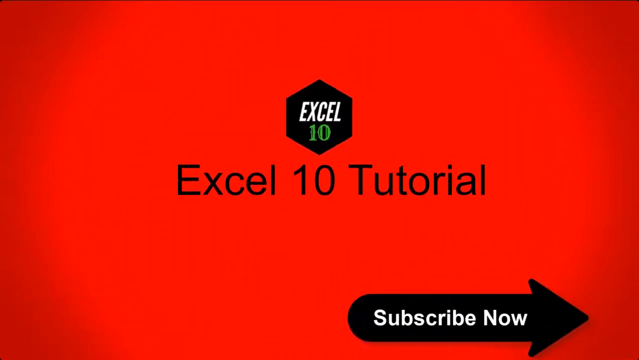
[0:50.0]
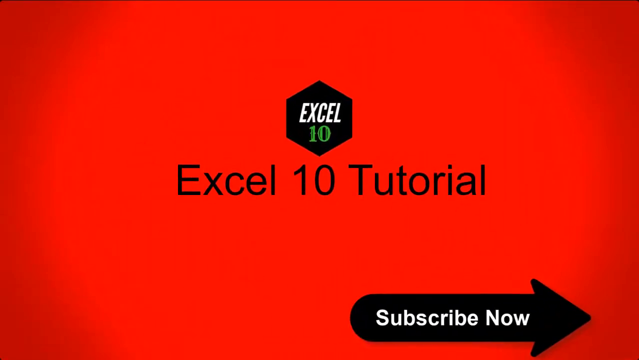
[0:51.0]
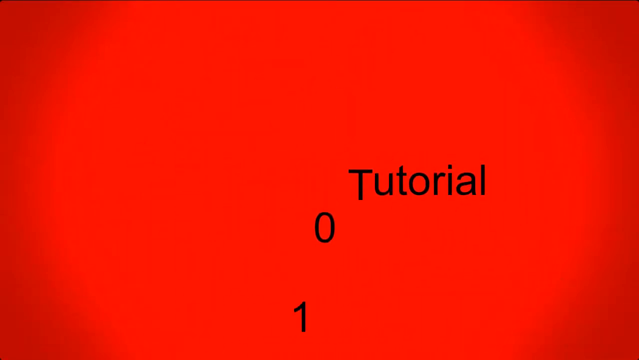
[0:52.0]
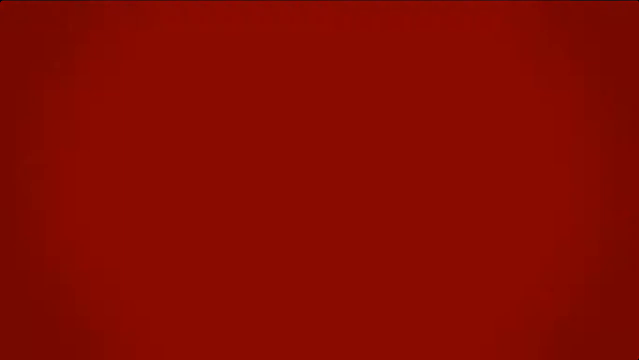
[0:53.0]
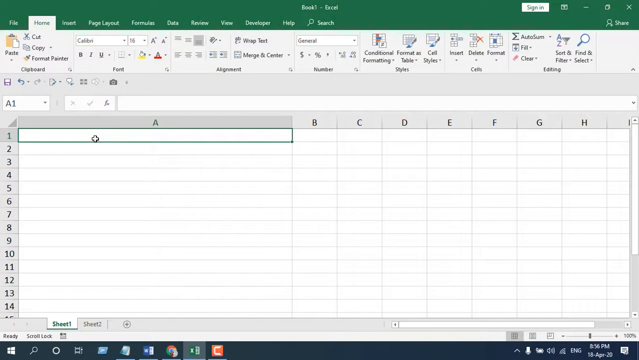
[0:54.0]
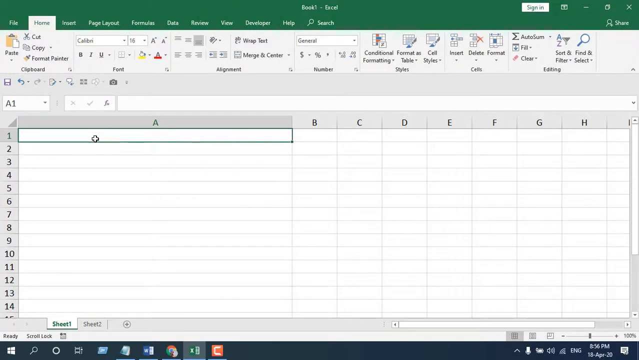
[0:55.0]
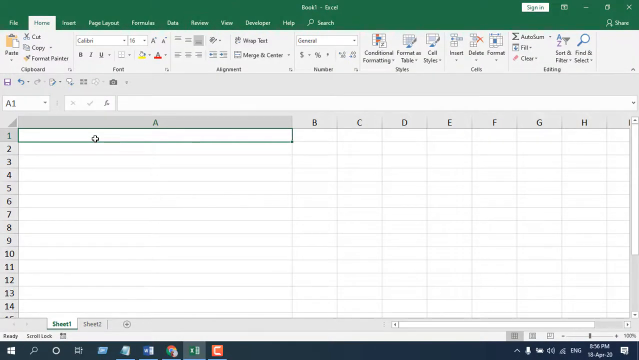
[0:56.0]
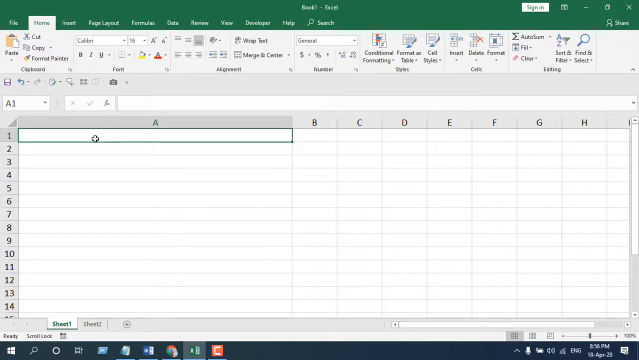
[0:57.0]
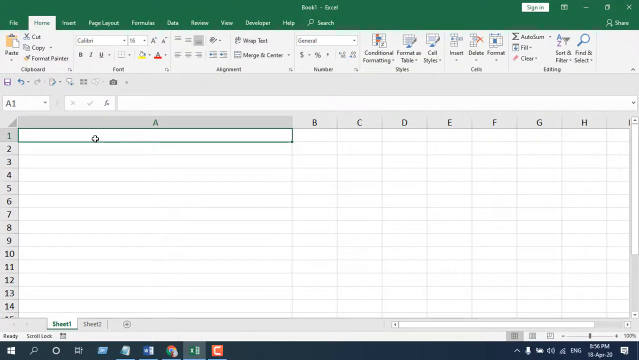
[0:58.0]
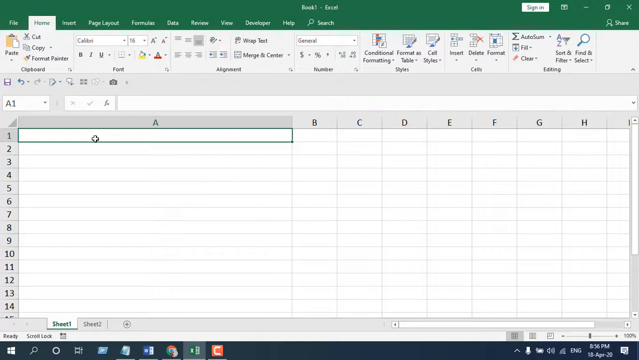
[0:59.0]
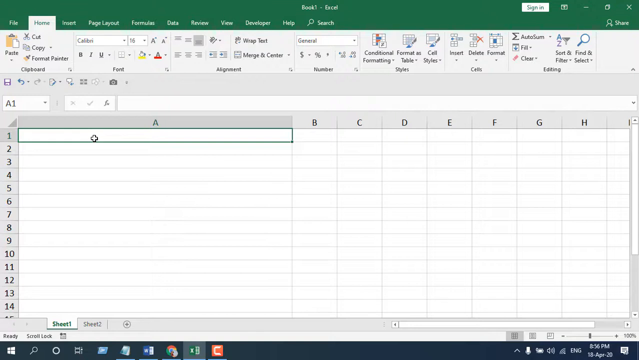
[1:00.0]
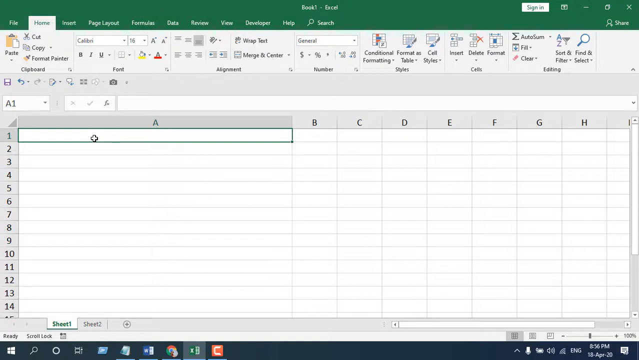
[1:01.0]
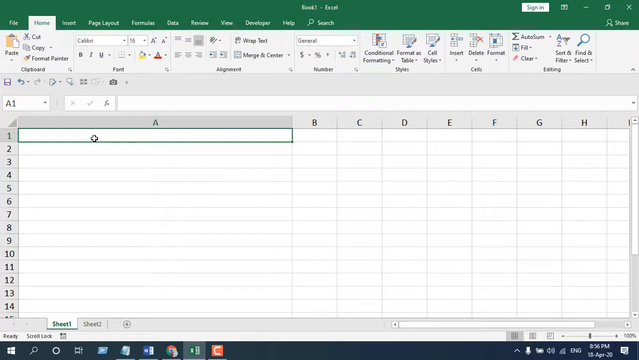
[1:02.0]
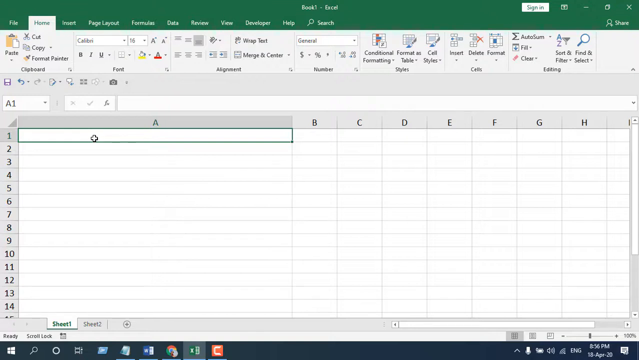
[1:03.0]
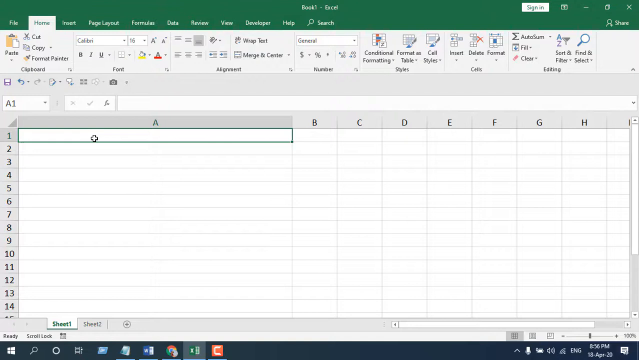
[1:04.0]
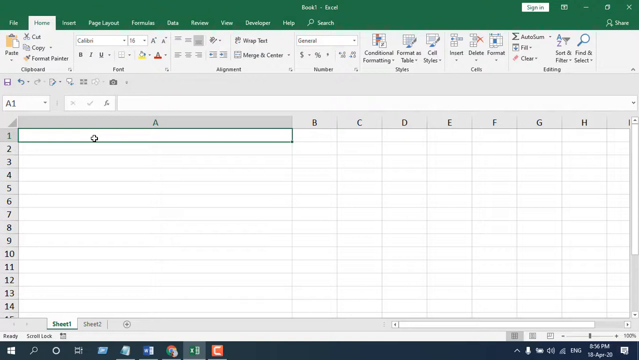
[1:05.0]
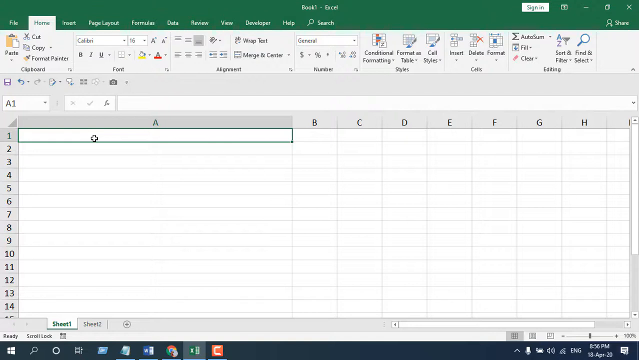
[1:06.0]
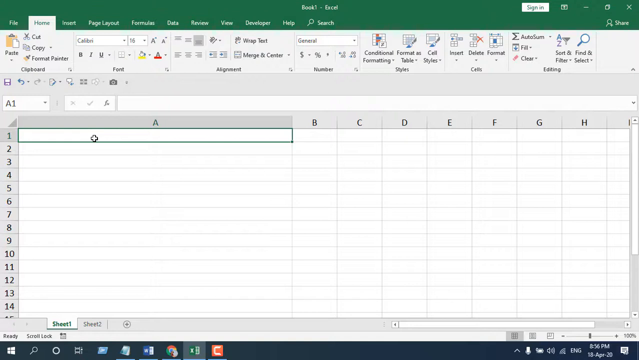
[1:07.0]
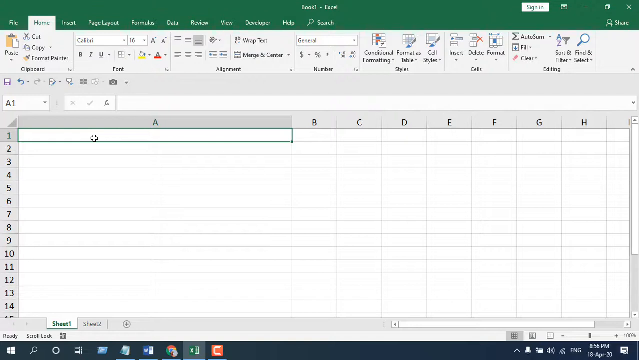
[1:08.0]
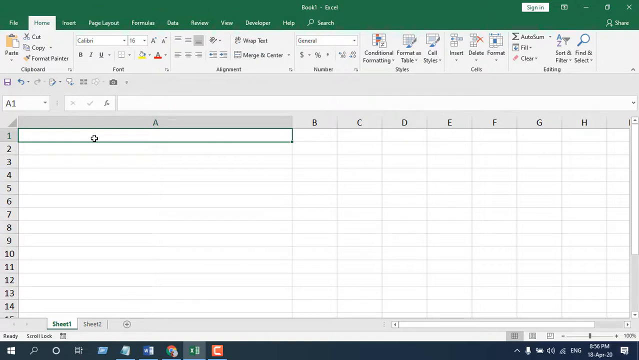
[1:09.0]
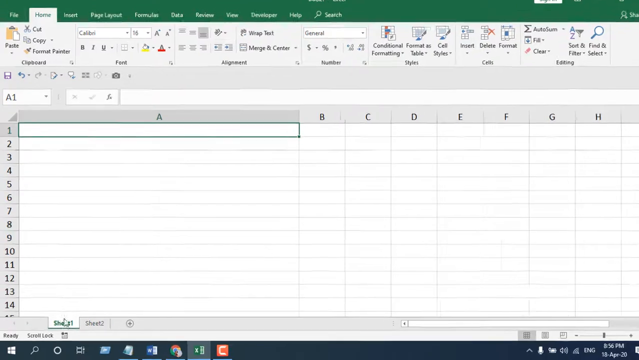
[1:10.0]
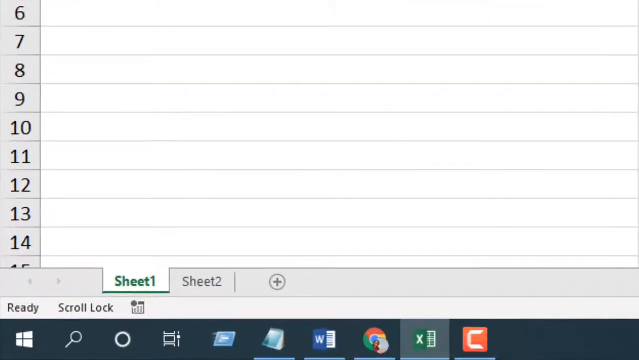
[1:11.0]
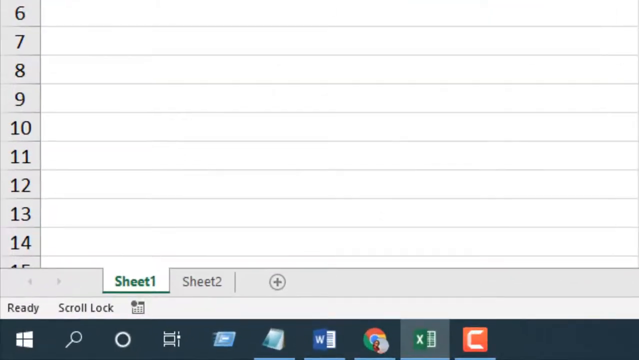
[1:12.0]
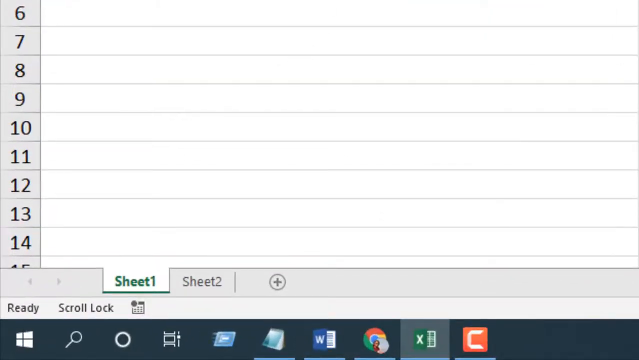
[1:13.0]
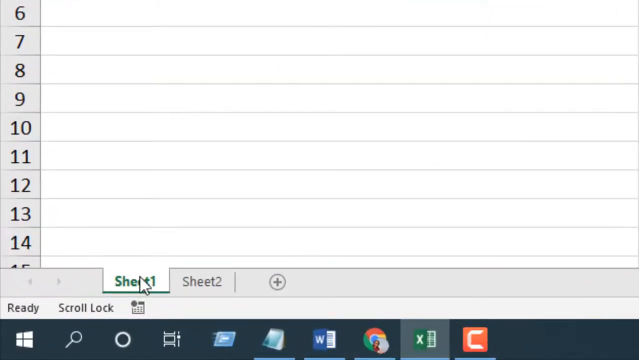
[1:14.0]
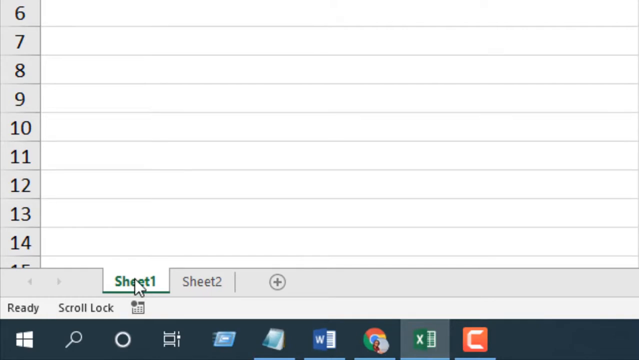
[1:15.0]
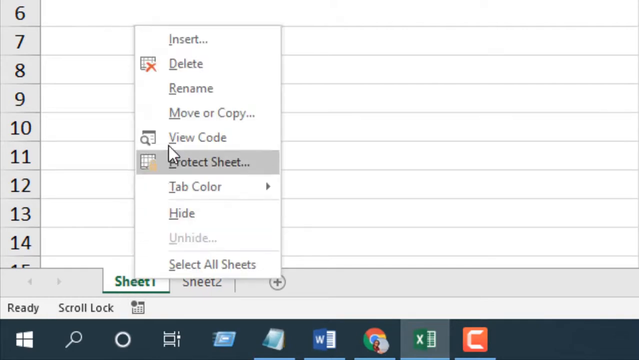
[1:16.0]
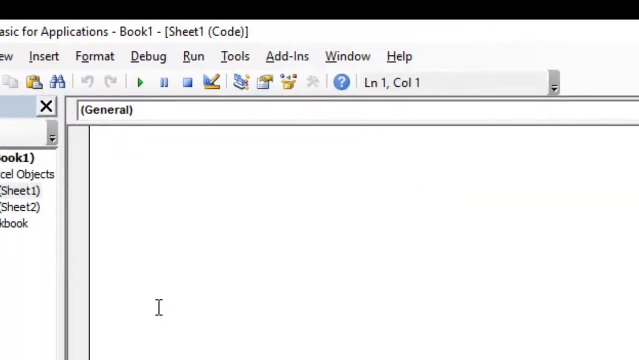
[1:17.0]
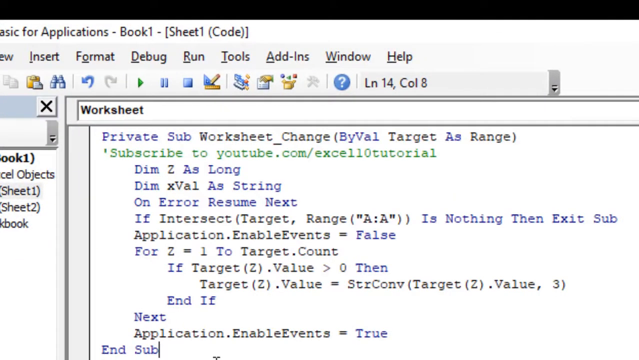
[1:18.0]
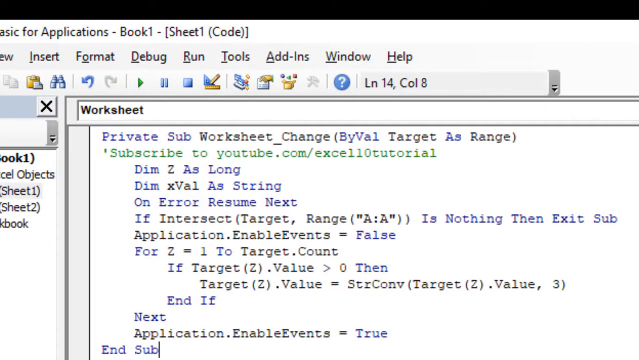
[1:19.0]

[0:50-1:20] At the top, a "subscribe now" shape appears: a long oval-like rectangle curved on its left edge, with an arrow pointing right and the words in white. It slides in from the right edge toward the left. The big black letters of "tutorial" fall down one by one, and the view returns to the Excel spreadsheet, now with no text. Cell A1 is blank with a green border. The cursor moves slowly a little to the left. At the bottom is the tab "Sheet 1", underlined and in green. To its right is an unused "Sheet 2" tab in gray, matching the gray bar to its right, and then a plus sign in a circle. At the bottom right is a zoom slider. The view zooms in on Sheet 1. Something is right-clicked and new code is opened, with "Sheet 1 code" displayed. A block of scripts appears to be copied and pasted in, including "private sub worksheet change" in blue, and above it a text field is titled "worksheet".